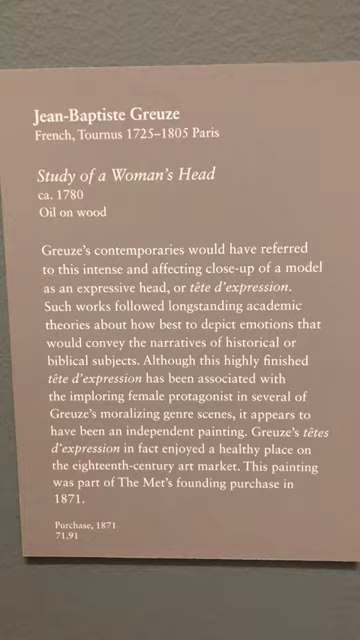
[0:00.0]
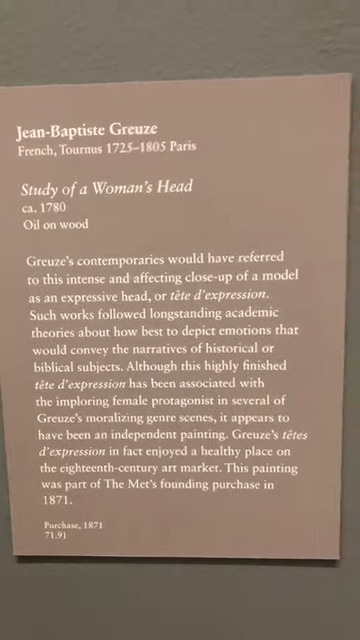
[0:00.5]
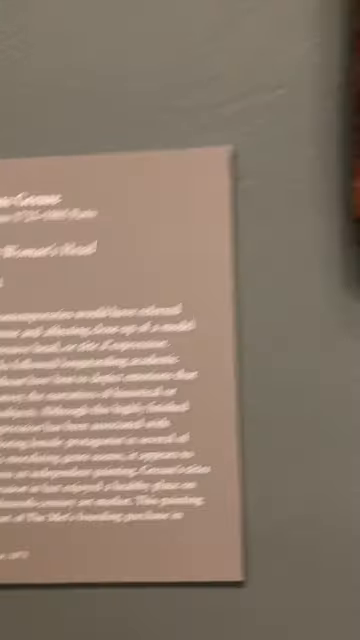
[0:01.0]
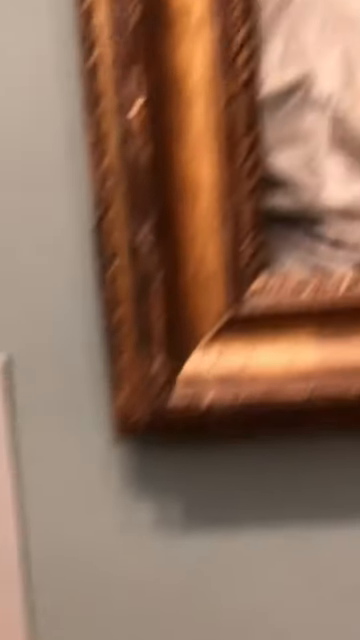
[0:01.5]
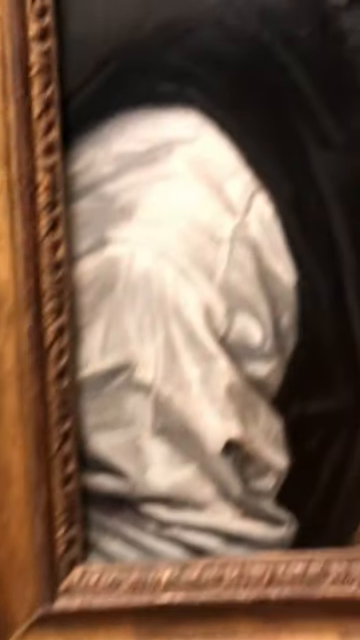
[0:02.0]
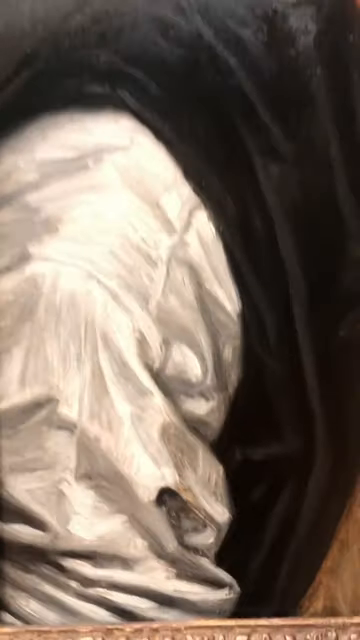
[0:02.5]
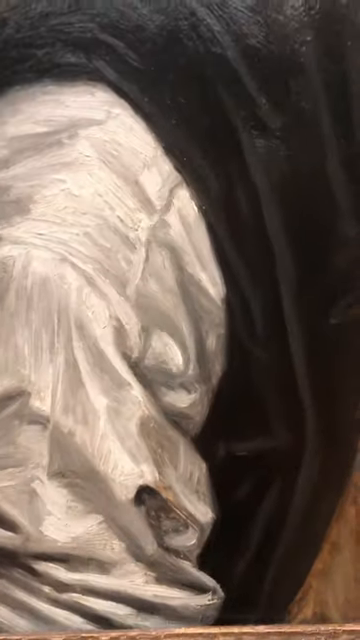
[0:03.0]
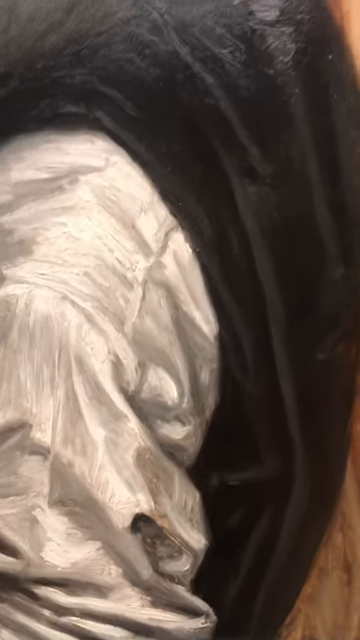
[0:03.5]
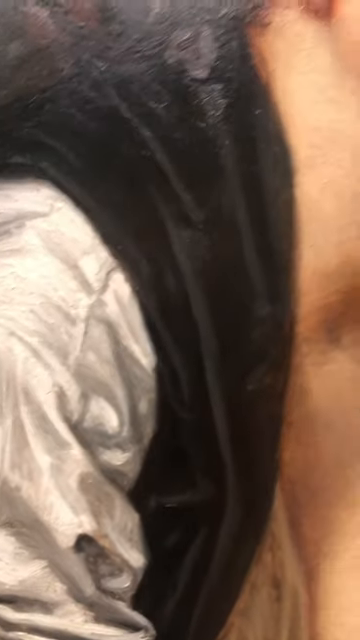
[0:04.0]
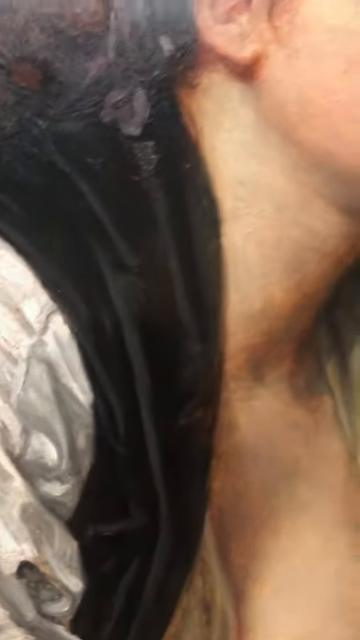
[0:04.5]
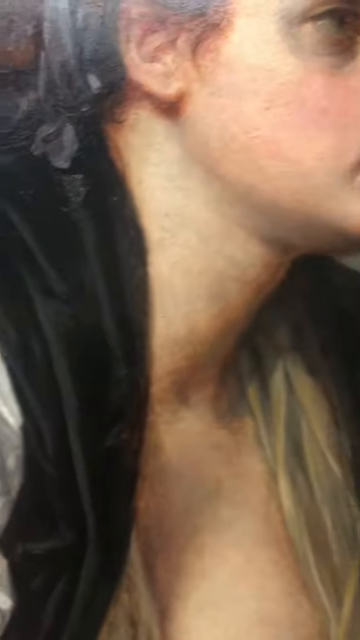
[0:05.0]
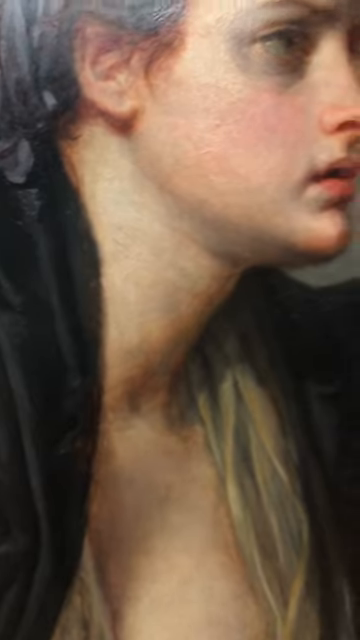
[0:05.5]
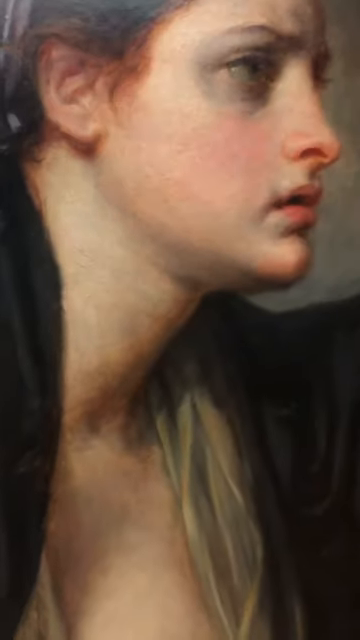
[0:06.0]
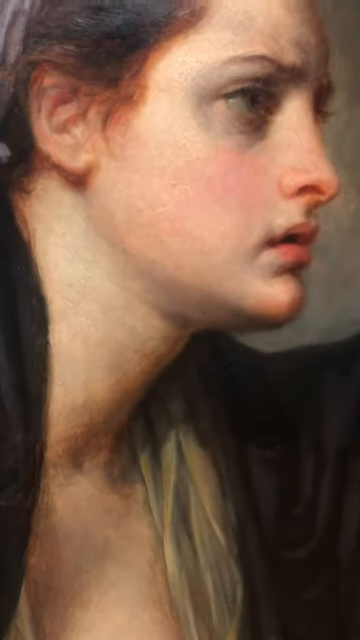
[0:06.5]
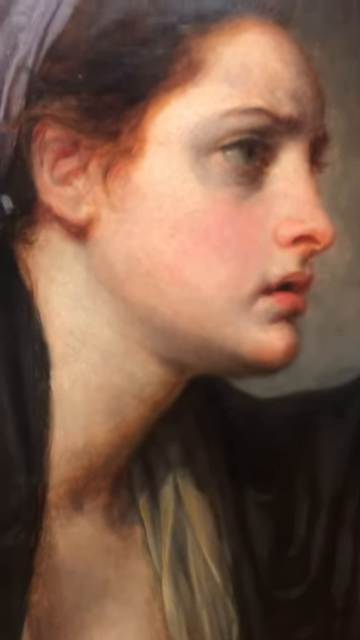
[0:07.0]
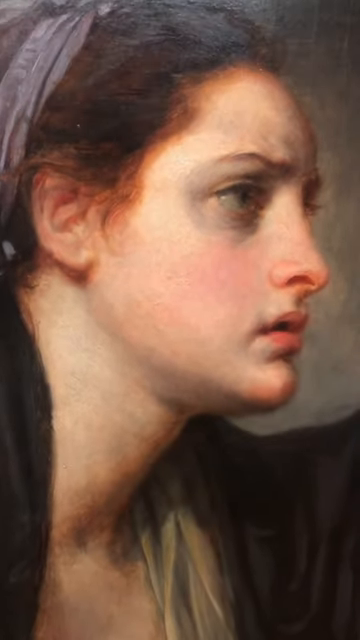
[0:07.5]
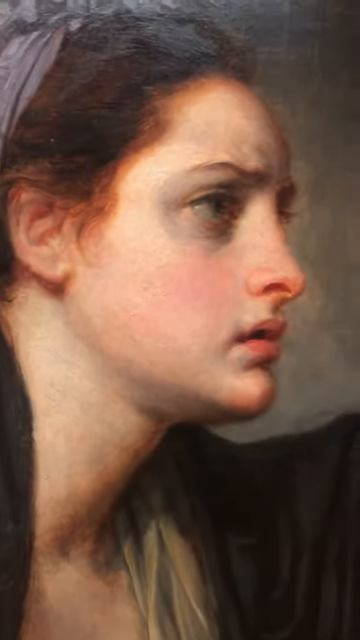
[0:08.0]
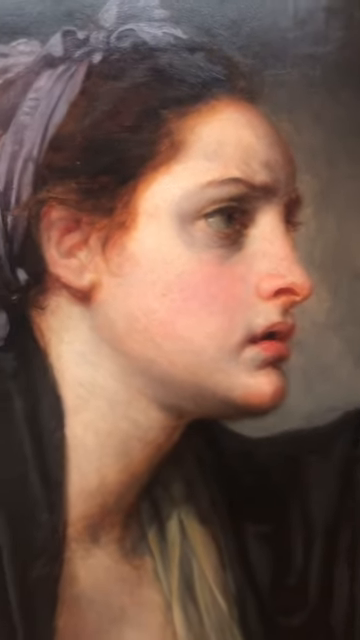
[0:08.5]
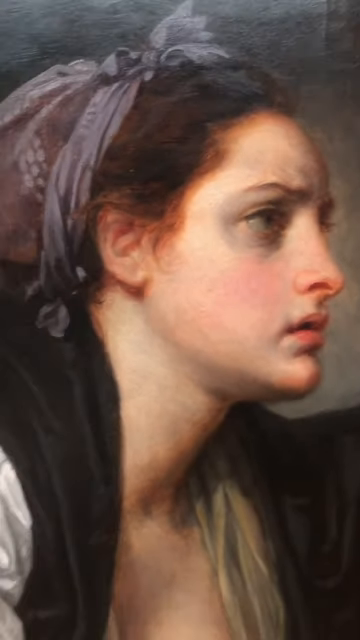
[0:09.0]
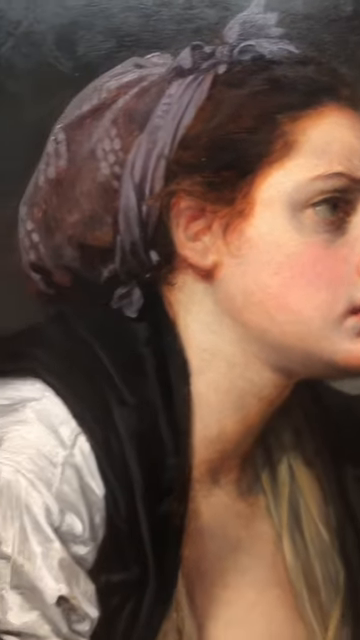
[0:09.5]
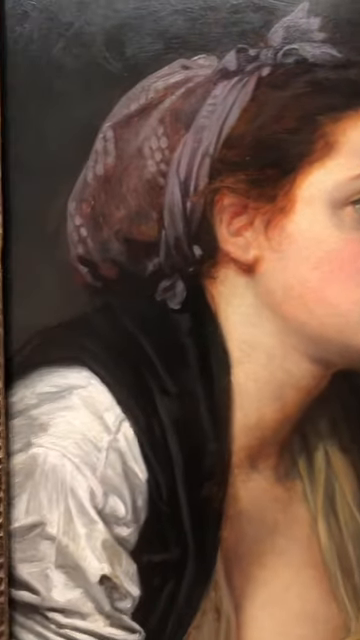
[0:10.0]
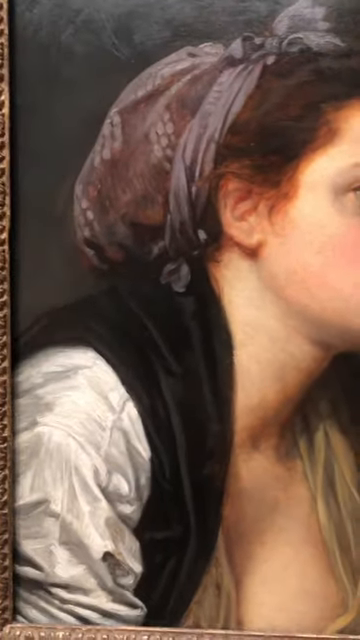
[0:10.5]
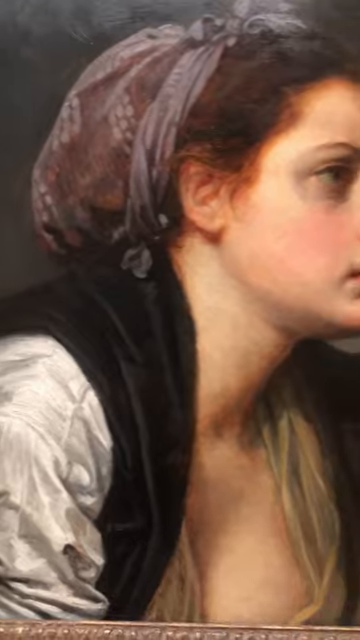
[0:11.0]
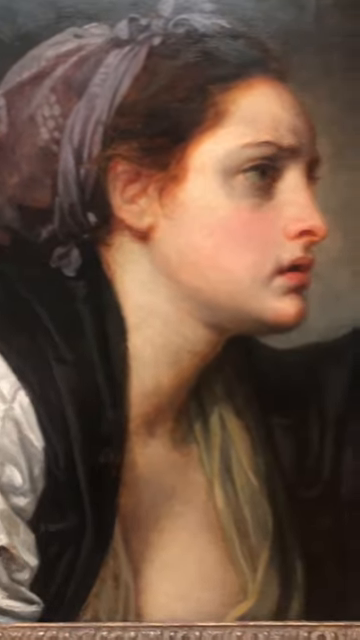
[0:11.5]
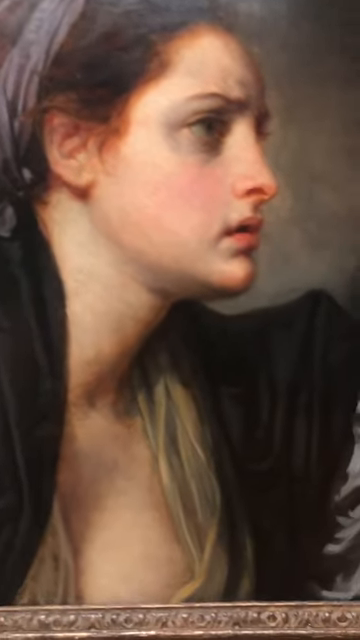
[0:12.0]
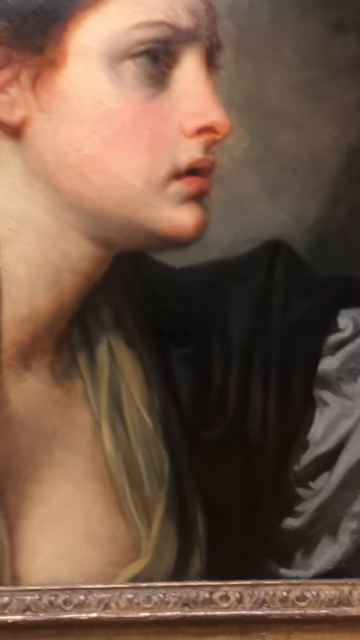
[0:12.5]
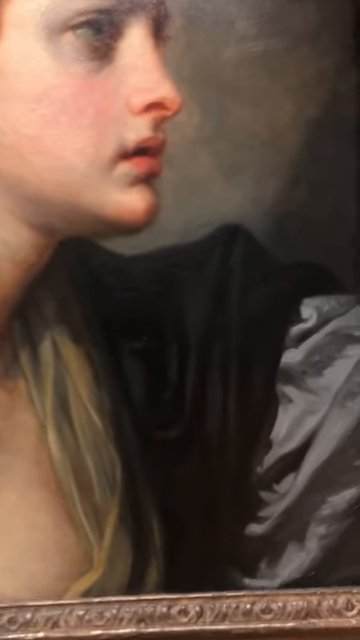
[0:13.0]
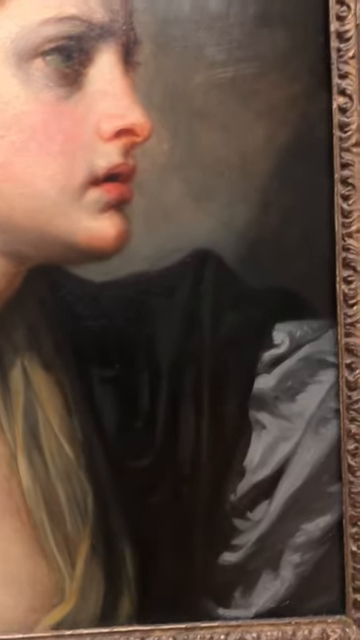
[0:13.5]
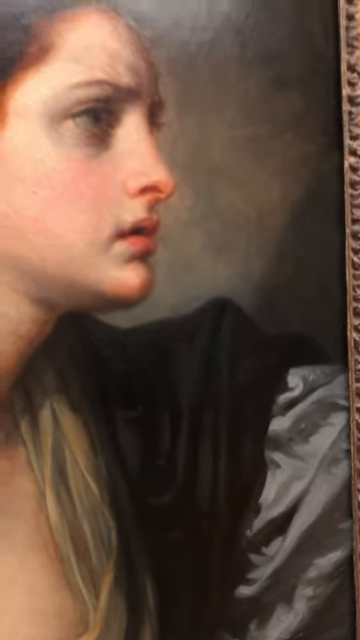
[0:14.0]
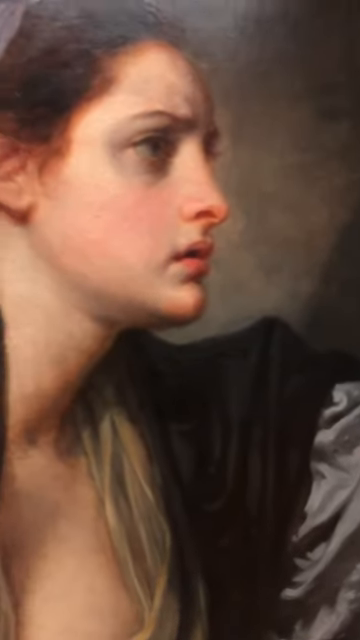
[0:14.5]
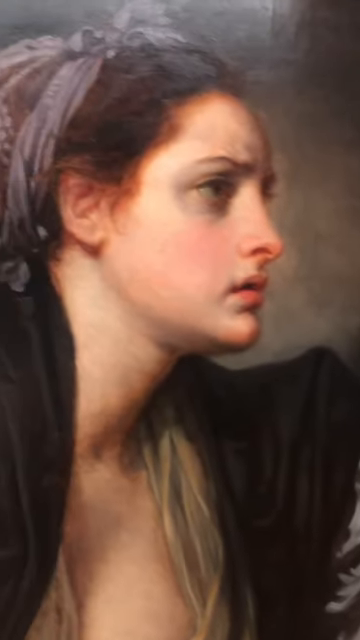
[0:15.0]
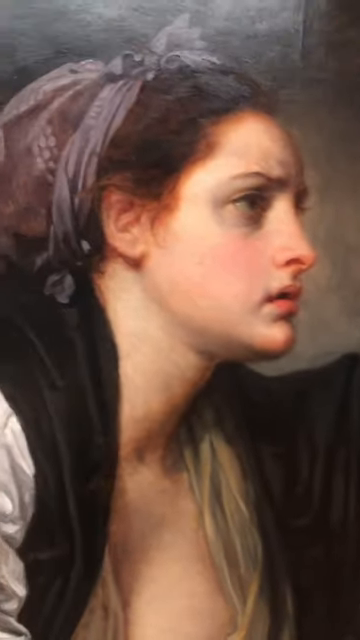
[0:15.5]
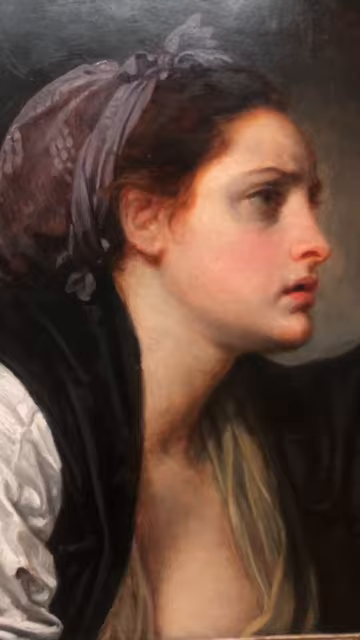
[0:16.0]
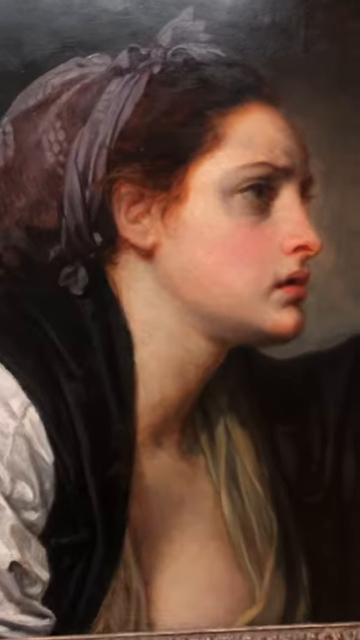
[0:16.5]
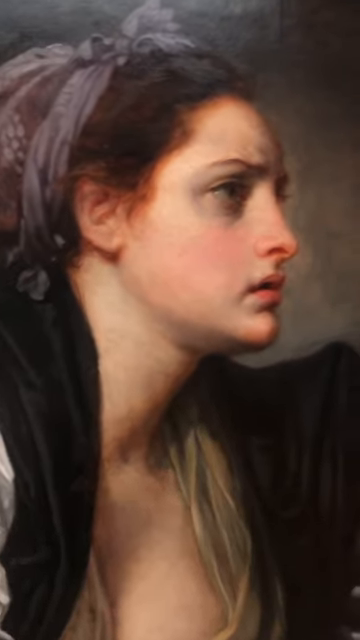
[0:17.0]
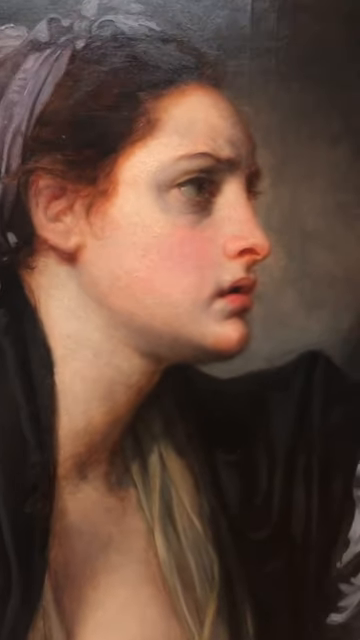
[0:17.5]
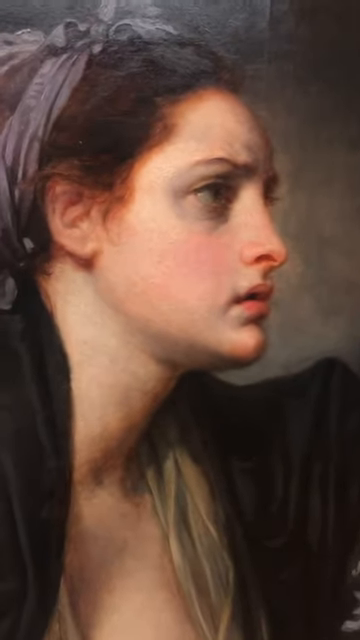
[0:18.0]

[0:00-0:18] A text description is displayed in what looks to be an art gallery or a museum. It names the artist as Jean-Baptiste Grey, French, Tournus, 1725-1805, Paris, and lists the work as "a woman's head, C.A. 1780, oil on wood." The text continues: "Grey's contemporaries would have referred to this intense and affecting close-up of a model as an expressive head" and "Such works followed long-standing academic theories about how best to depict emotions that would convey the narratives of historical and biblical subjects." It also states that the work "appears to have been an independent painting," that it "enjoyed a healthy place on the 18th-century art market," and that "This painting was part of the Met's founding purchase in 1871." The camera then moves to show the painting being described: a person's face that looks very afraid.